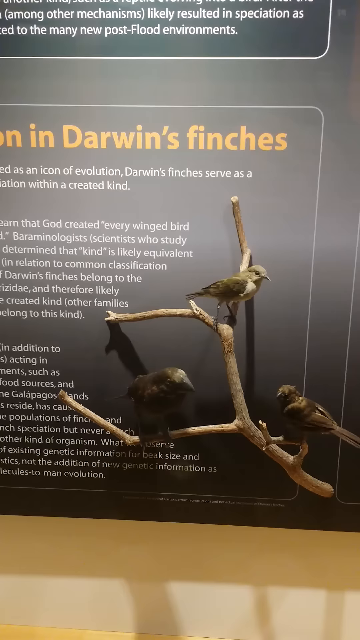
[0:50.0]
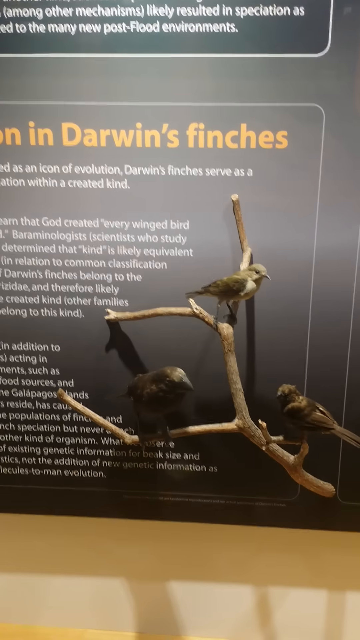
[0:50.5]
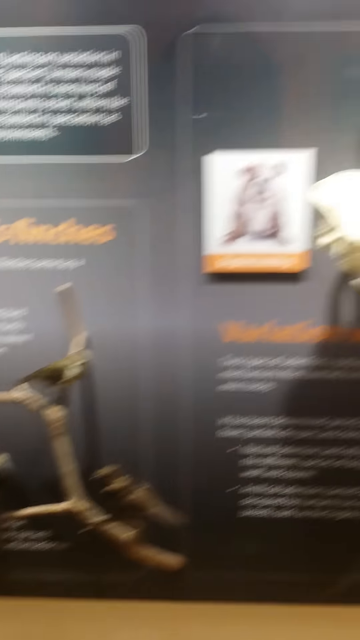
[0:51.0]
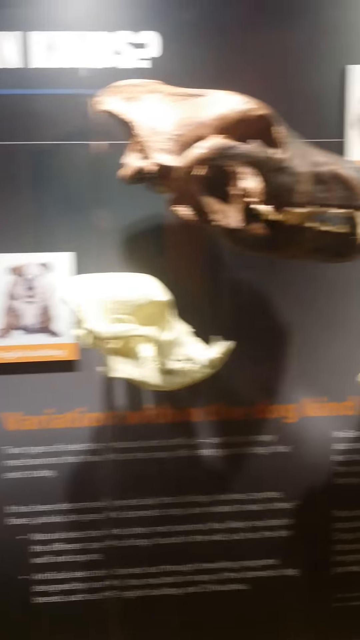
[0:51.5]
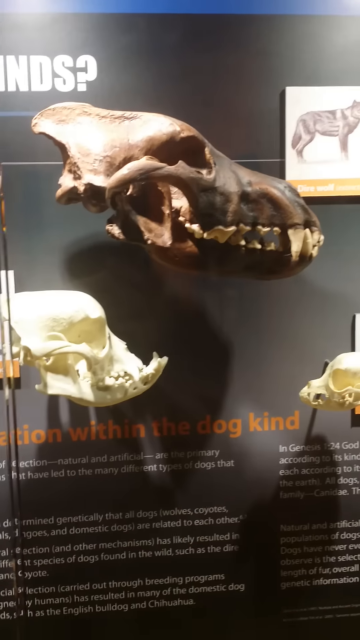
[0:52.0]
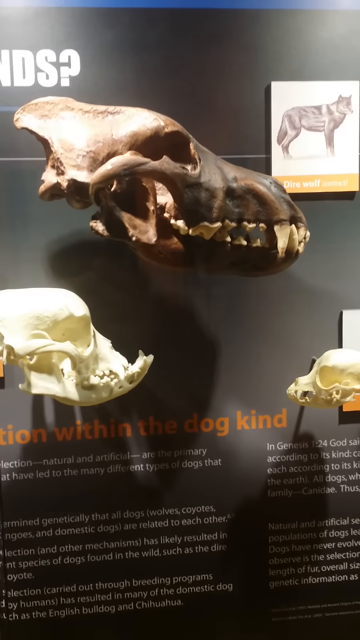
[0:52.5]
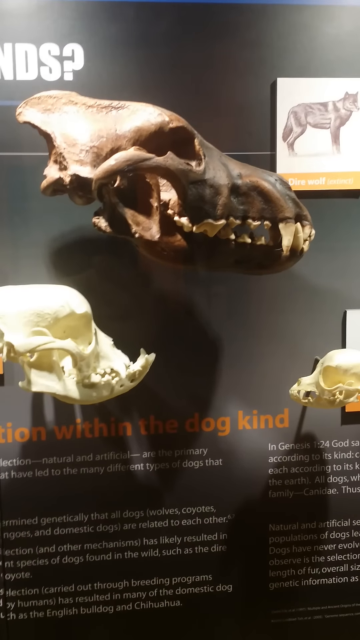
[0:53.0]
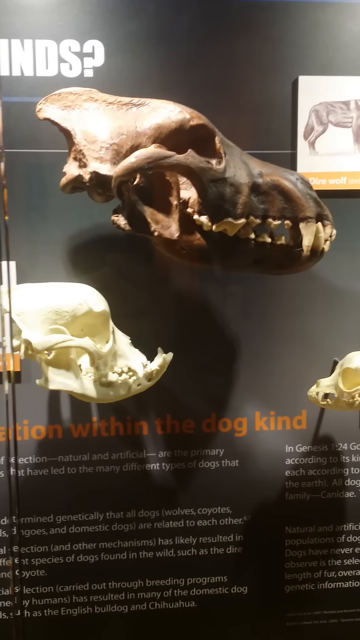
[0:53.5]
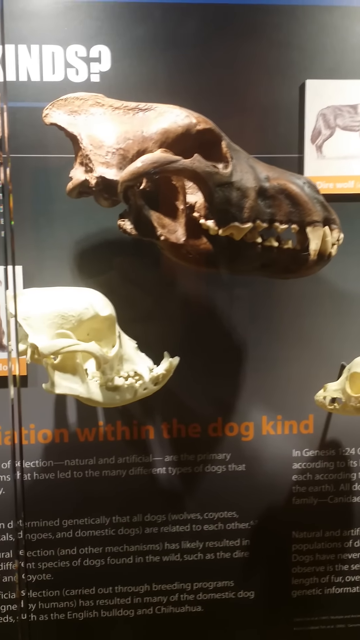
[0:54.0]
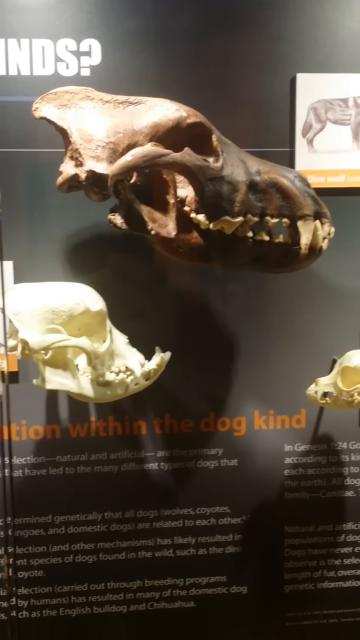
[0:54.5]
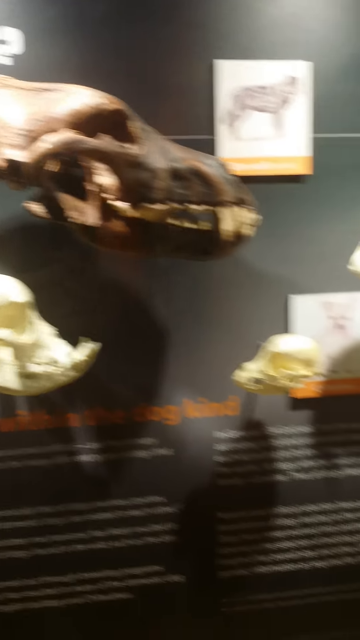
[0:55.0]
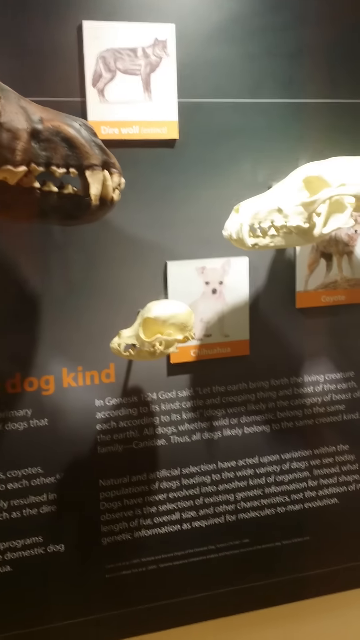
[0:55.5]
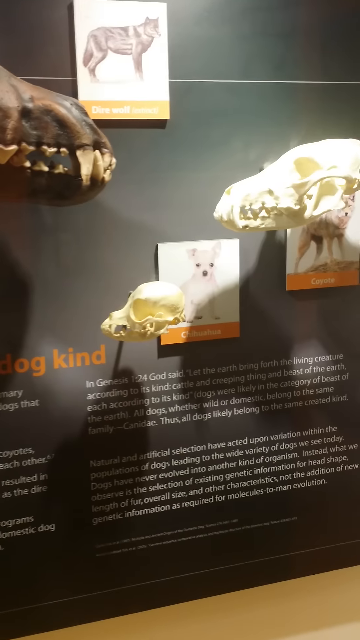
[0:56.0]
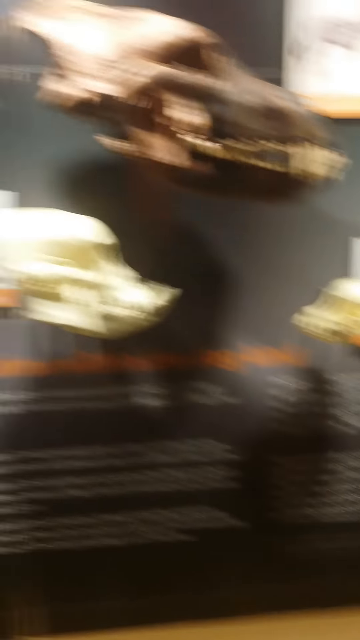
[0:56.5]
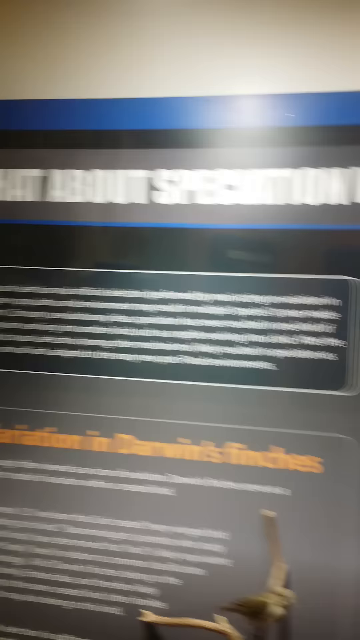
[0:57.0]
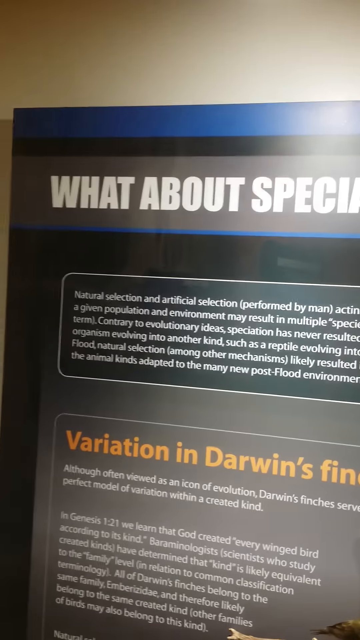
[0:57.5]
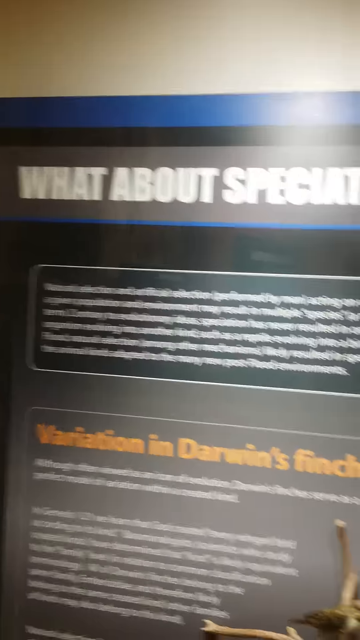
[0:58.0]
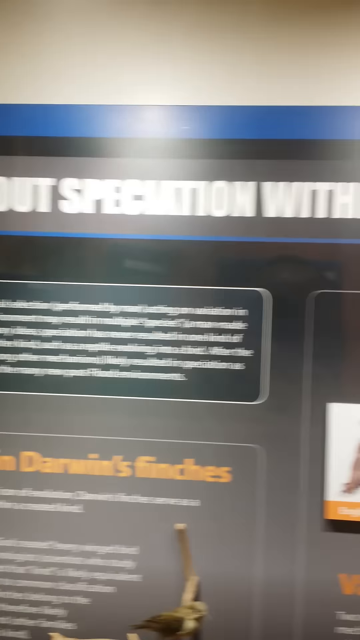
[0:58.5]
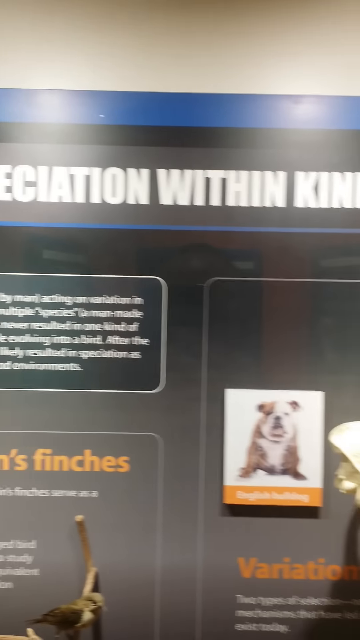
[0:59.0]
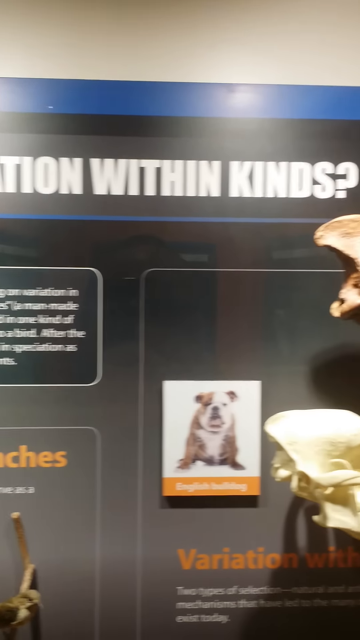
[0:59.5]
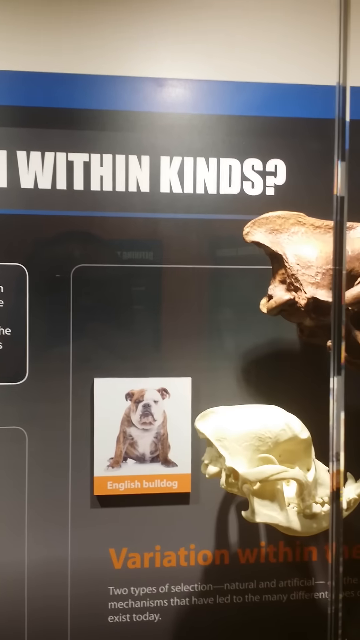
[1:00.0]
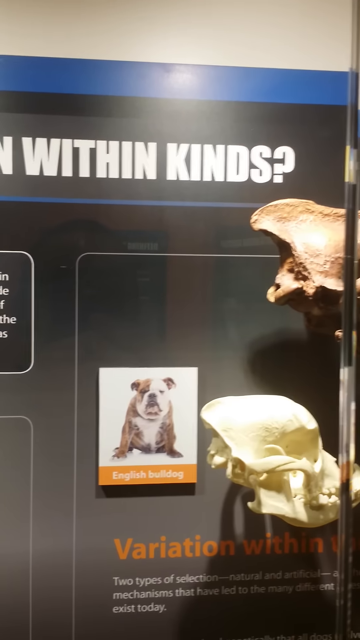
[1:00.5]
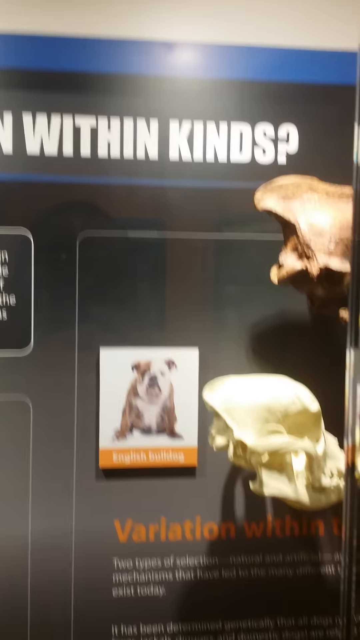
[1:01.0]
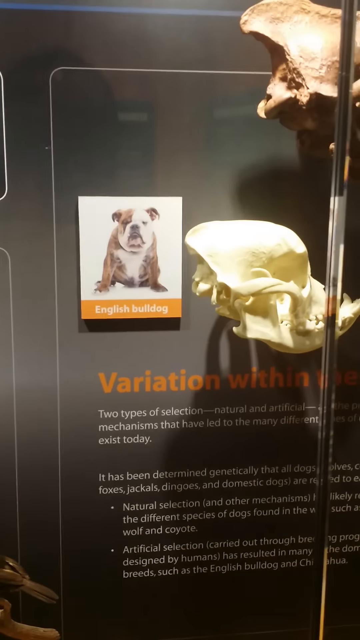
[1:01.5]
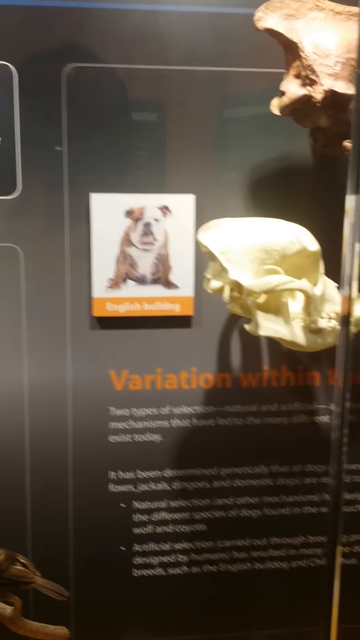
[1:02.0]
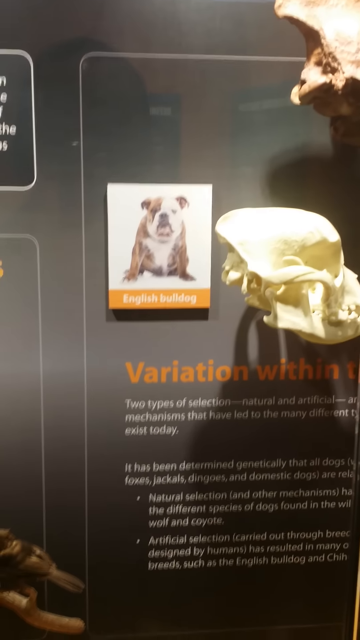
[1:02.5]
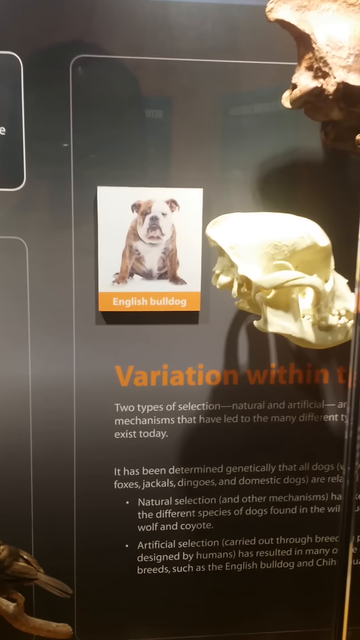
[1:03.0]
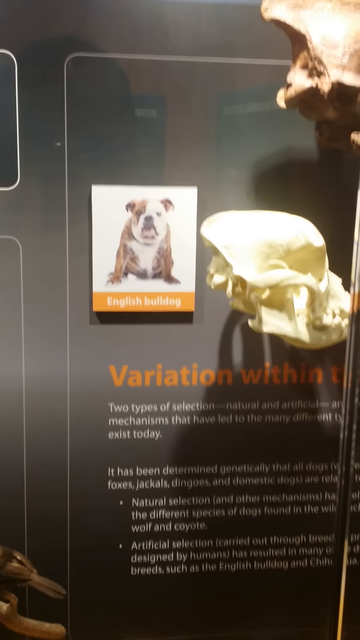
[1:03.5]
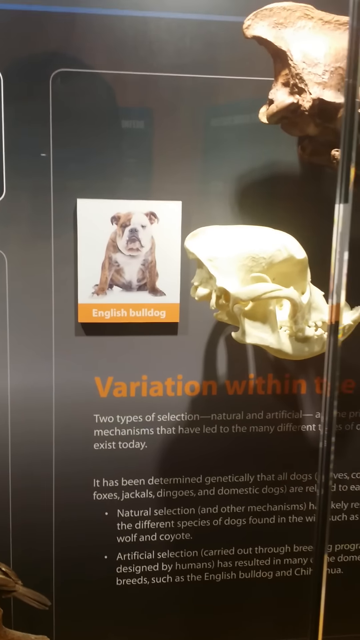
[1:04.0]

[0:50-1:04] The shot starts with the same three Darwin's finches, with some of the text about them visible. The camera moves back and forth between the dog skulls and the text explaining the title and introduction to this section on natural variation and selection, making much of the text very difficult to read. The setting is clearly an exhibition in a museum, possibly the British Natural History Museum.